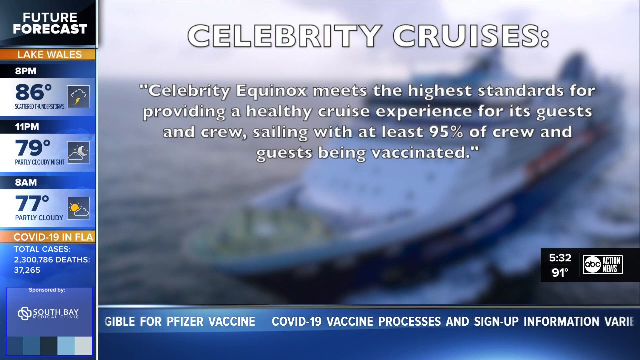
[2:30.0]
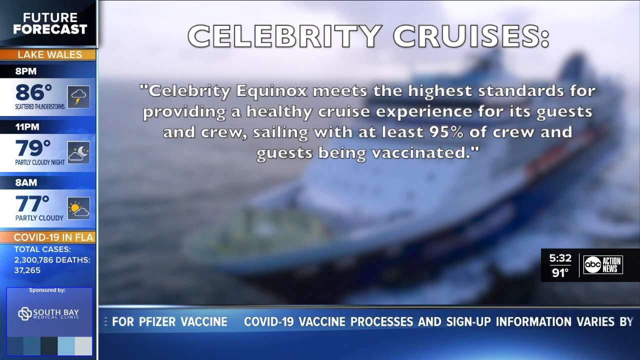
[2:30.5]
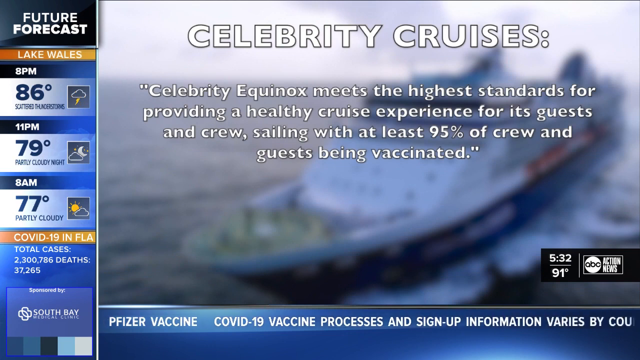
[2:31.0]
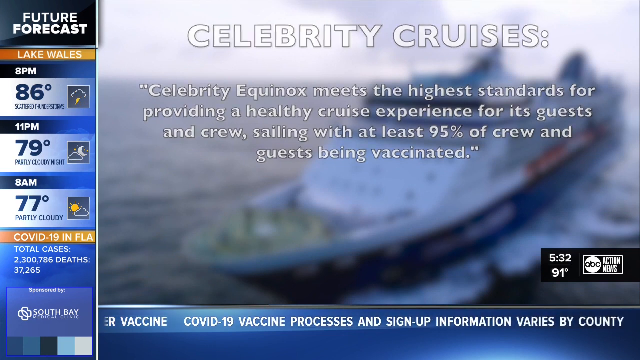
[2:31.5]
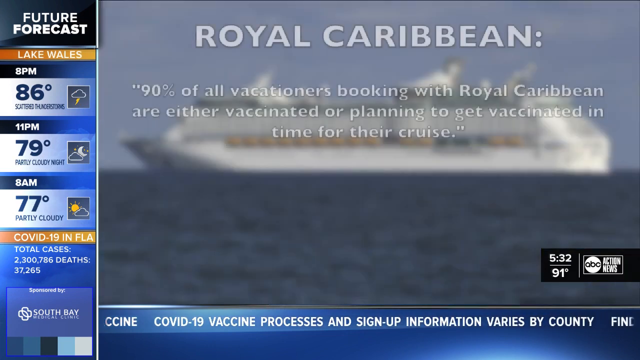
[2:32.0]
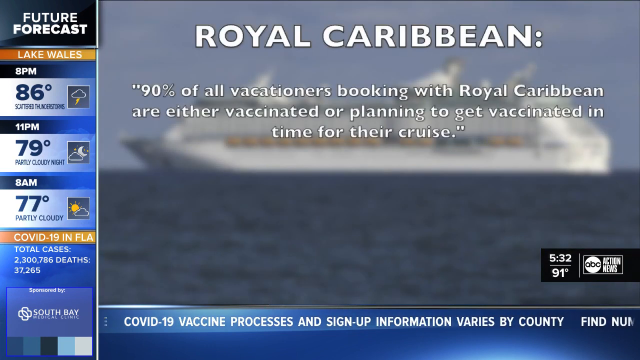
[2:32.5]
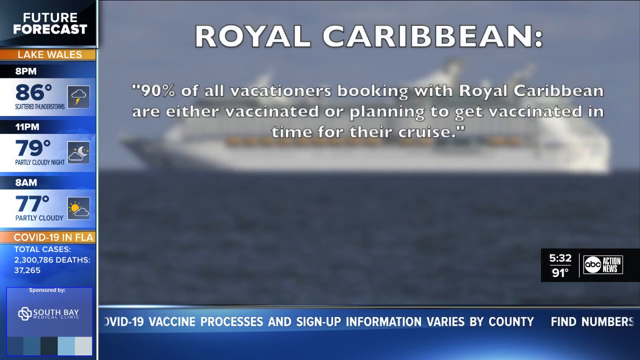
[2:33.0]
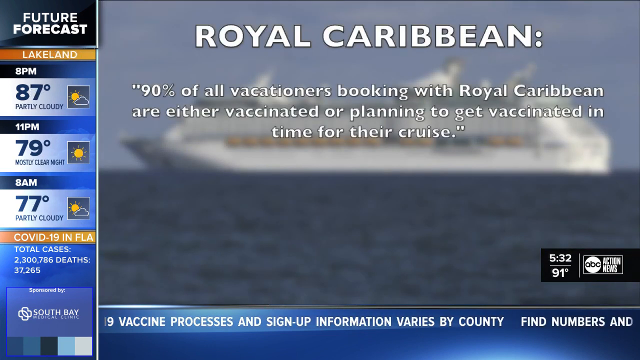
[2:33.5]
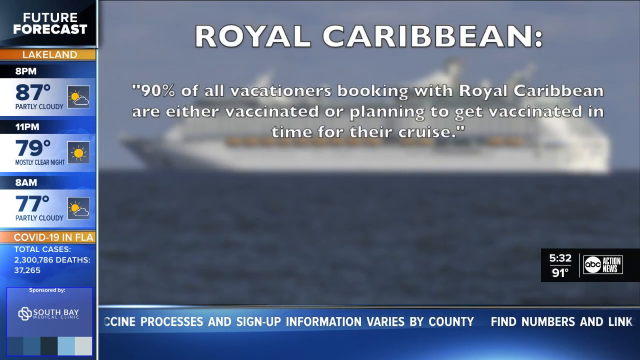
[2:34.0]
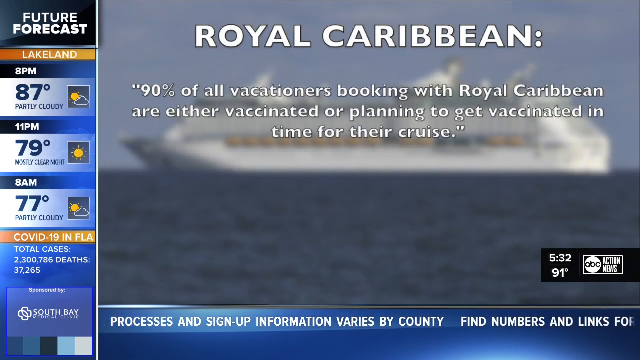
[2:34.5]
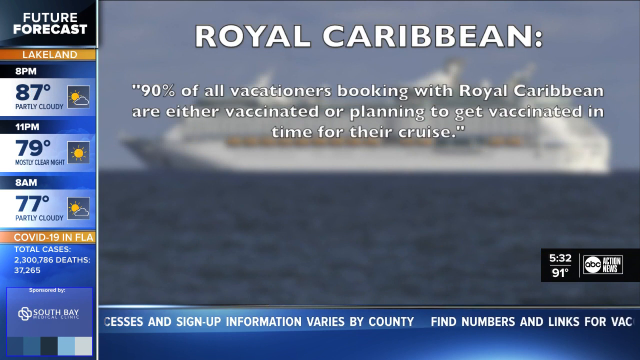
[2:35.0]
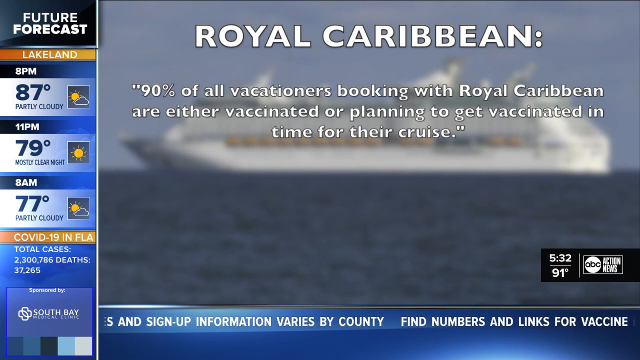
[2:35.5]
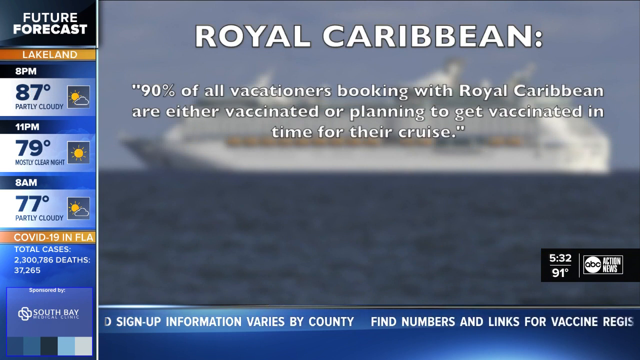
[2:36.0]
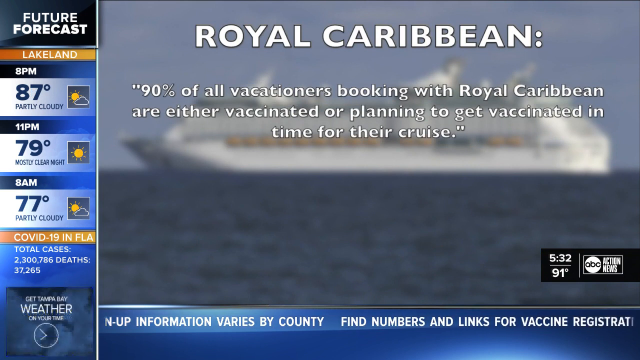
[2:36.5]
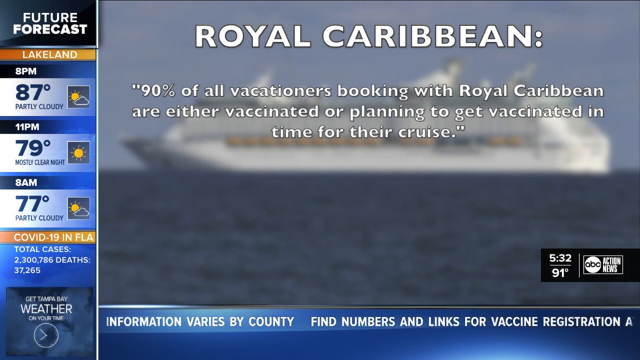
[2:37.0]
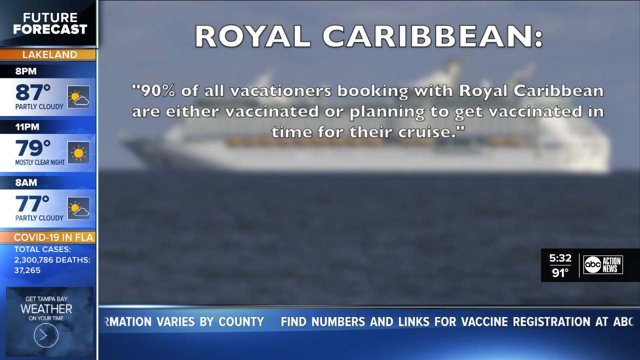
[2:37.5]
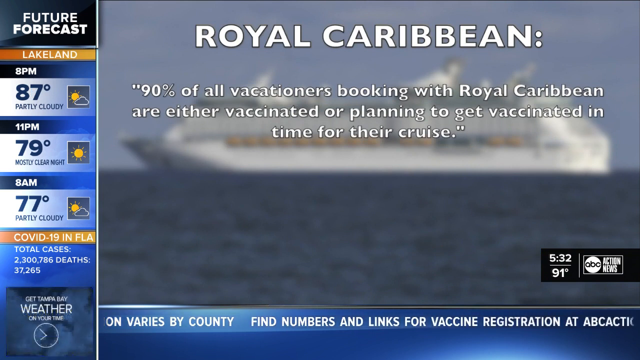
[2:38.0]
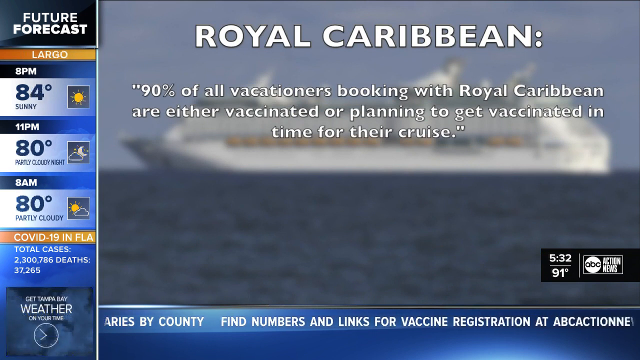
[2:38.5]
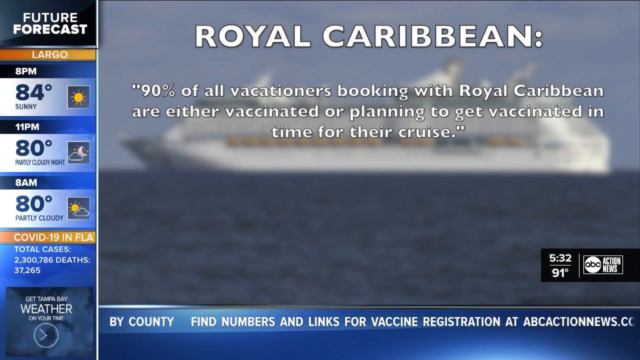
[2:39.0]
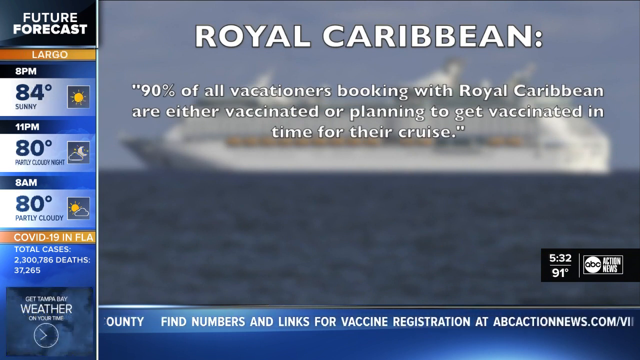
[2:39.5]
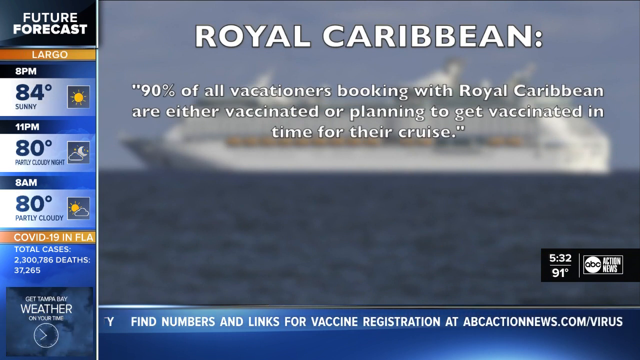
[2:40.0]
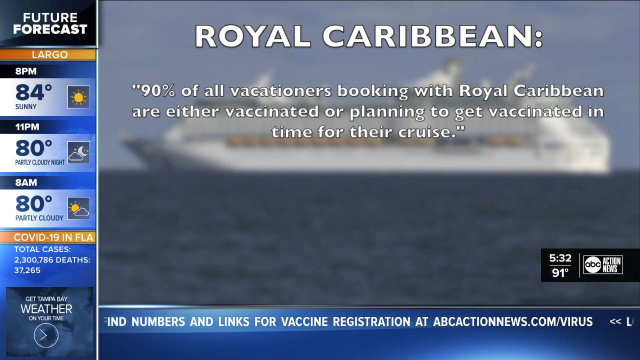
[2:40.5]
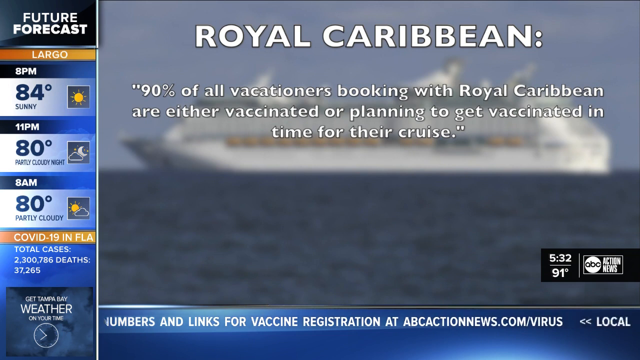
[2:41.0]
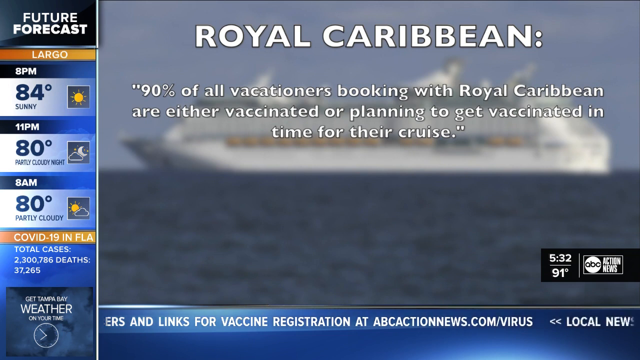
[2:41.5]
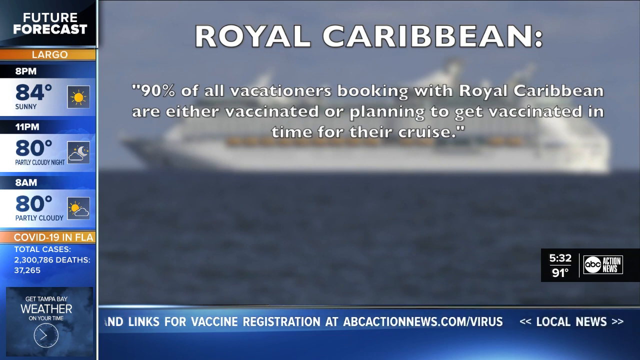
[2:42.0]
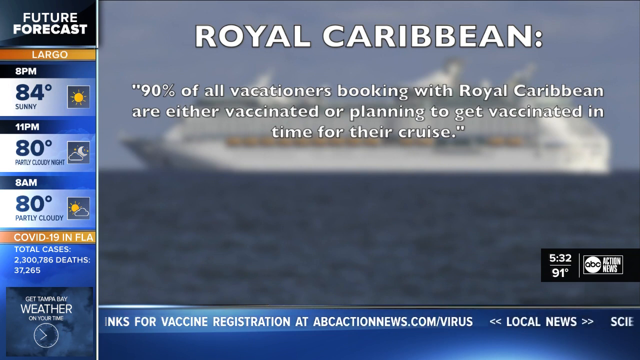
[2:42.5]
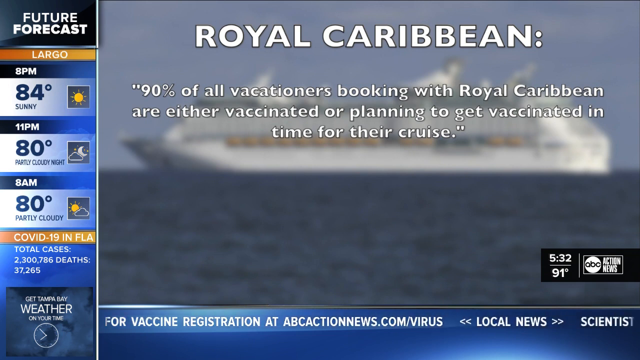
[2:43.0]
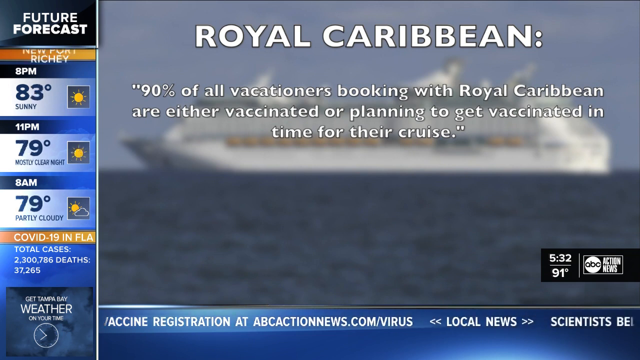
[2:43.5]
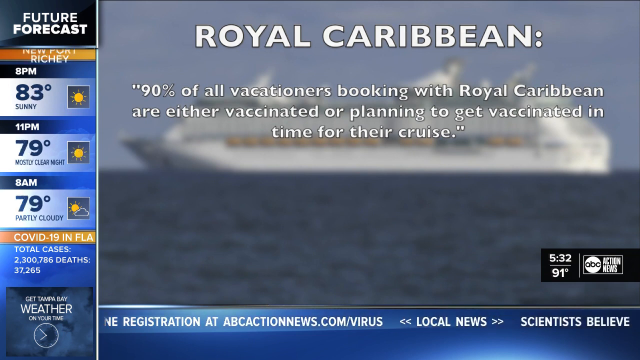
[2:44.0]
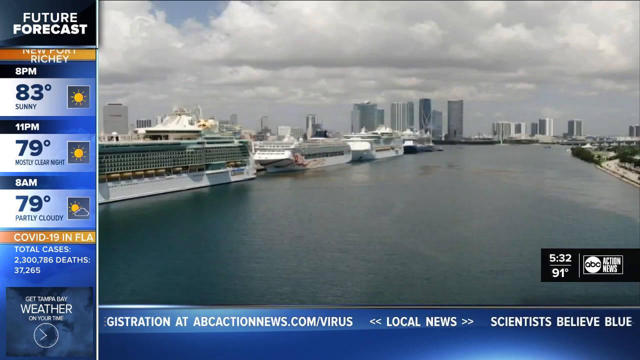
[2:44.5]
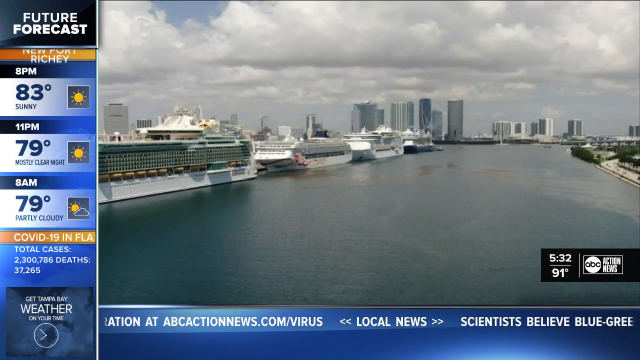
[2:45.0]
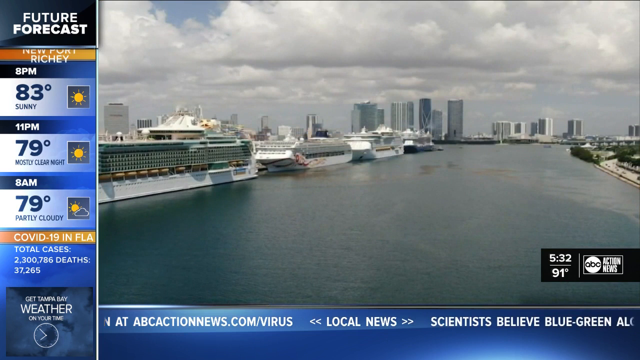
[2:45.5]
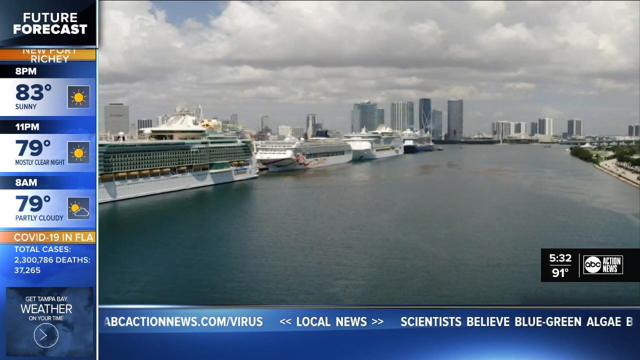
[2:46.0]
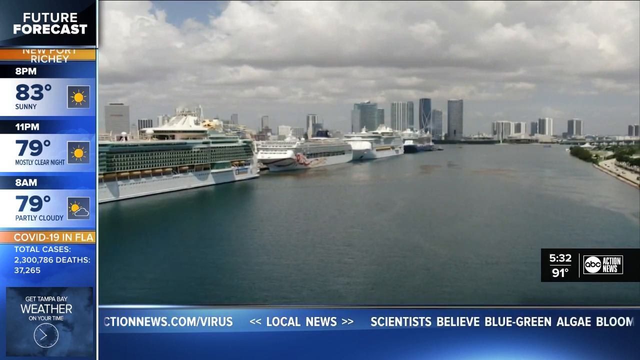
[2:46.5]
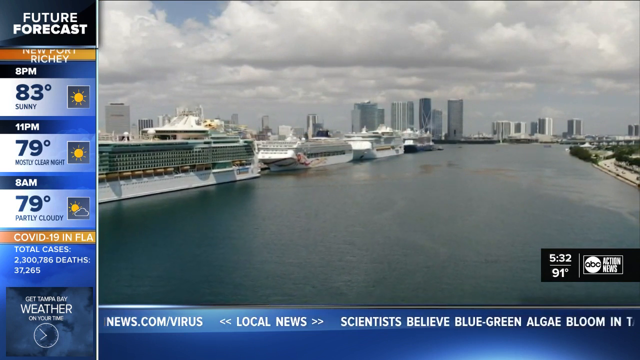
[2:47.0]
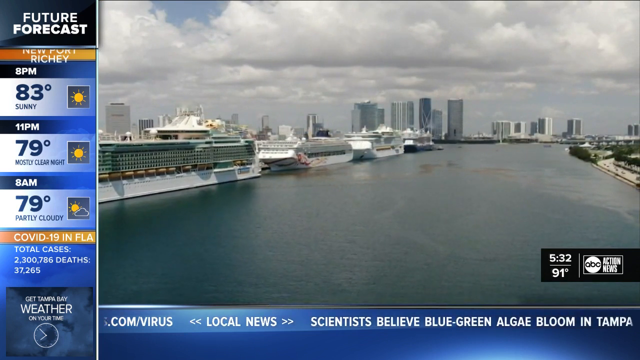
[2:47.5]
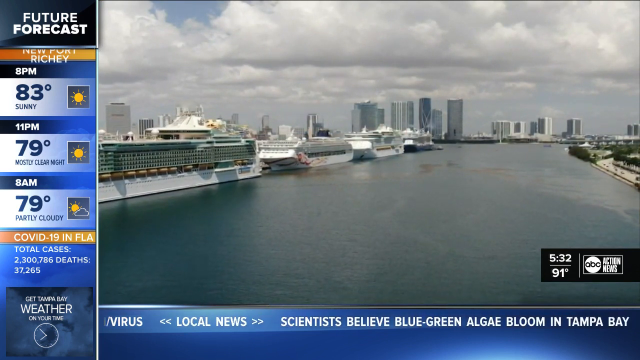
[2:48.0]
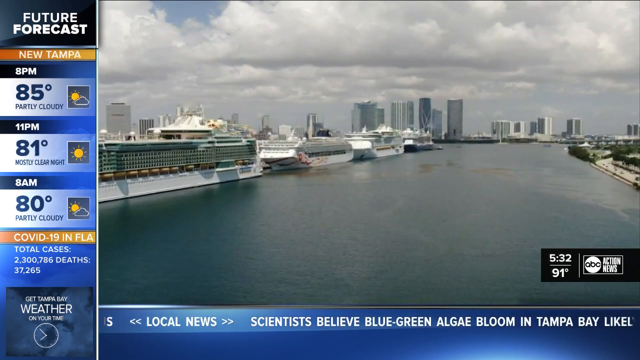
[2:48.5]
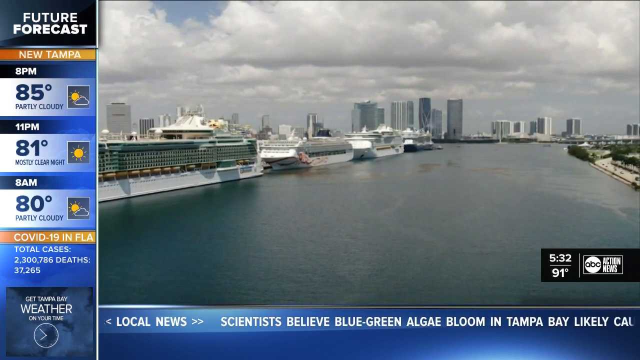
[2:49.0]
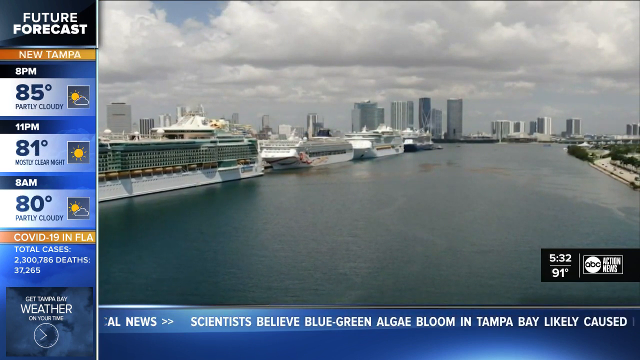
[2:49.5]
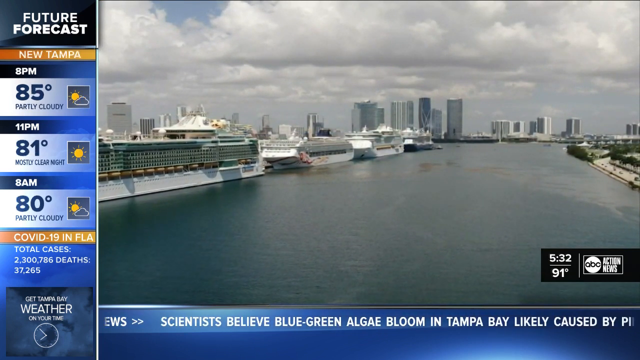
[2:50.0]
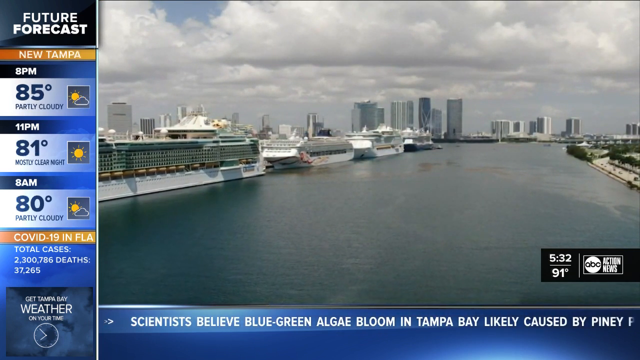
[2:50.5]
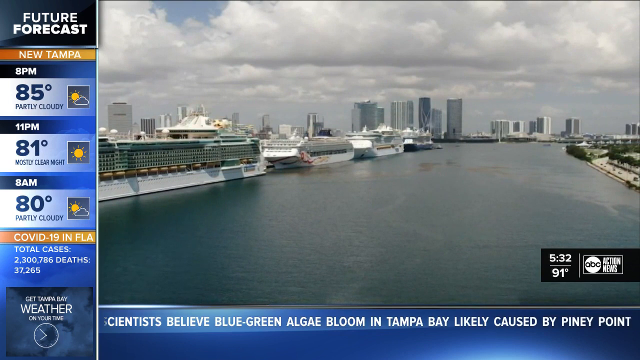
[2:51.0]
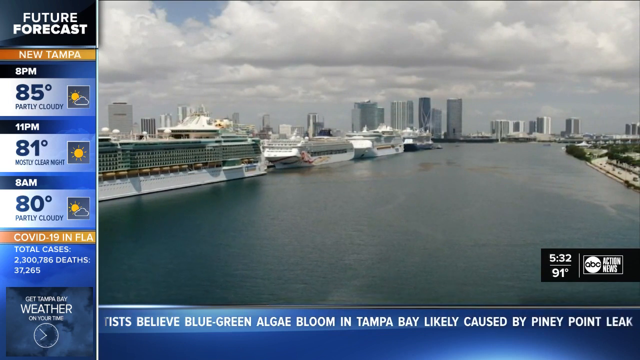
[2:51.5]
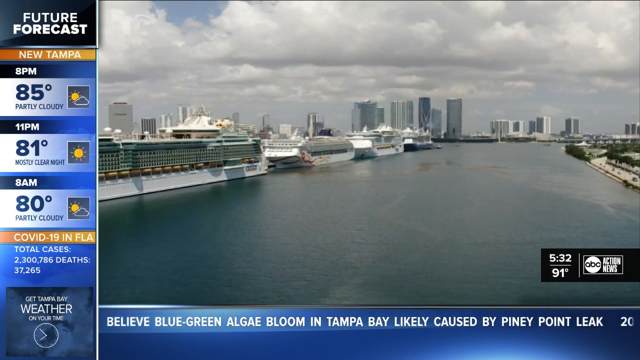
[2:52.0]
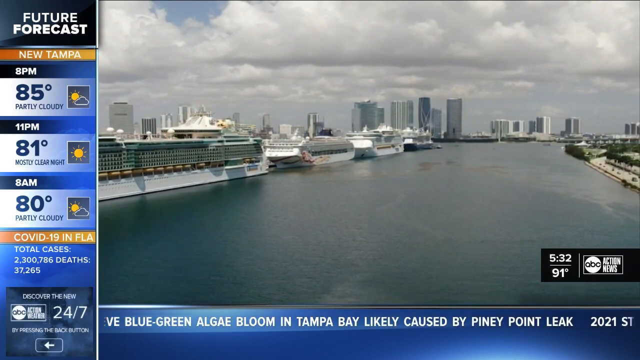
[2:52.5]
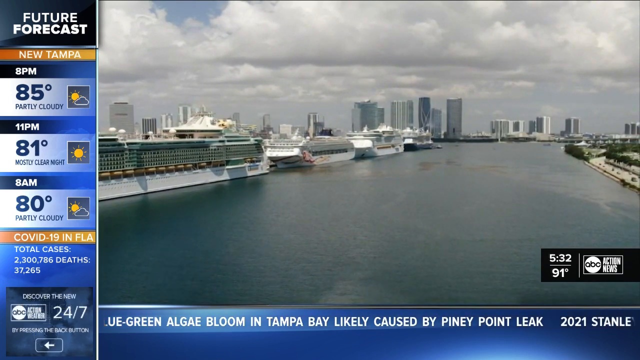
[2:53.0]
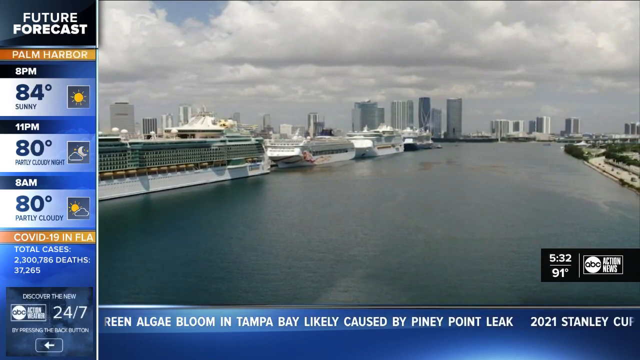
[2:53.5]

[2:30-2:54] A quote from Celebrity Cruises is shown in quotation marks: "Celebrity Equinox meets the highest standards for providing a healthy cruise experience for its guests and crew, sailing with at least 95% of crew and guests being vaccinated". Royal Caribbean's statement follows: "90% of all vacationers booking with Royal Caribbean are either vaccinated or planning to get vaccinated in time for their cruise". The ABC Action News logo is in the bottom right corner. The video closes on a view of the Bay Area full of cruise ships. On the left, "future forecast" is written in white at the top, with "Balm Harbour" on an orange background below it, followed by "8pm", "84 degrees" with sun, "11pm", "80 degrees", "8am", "80 degrees", "partly cloudy", and "COVID-19" on orange with total cases.